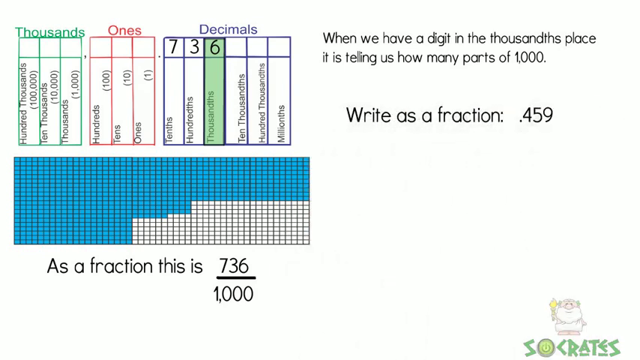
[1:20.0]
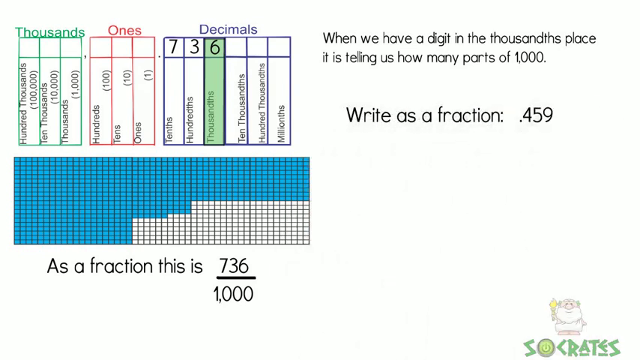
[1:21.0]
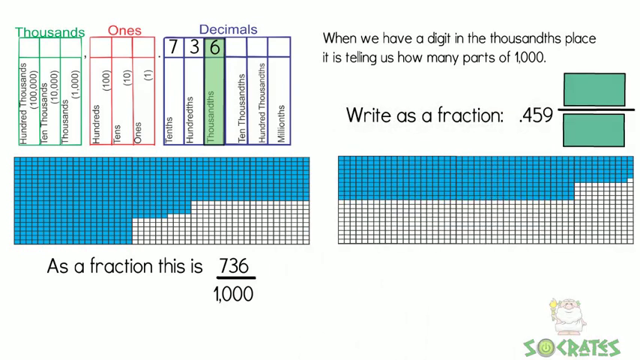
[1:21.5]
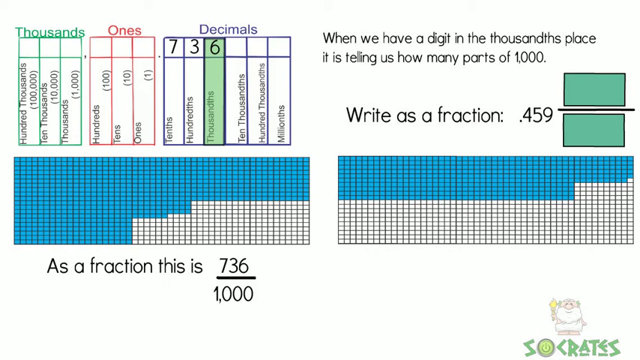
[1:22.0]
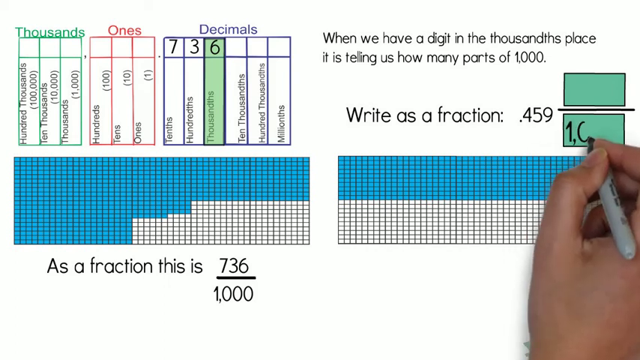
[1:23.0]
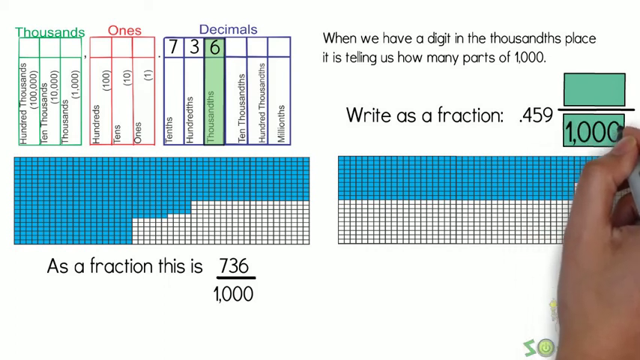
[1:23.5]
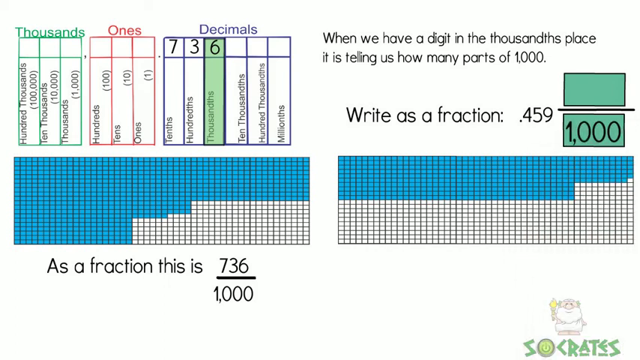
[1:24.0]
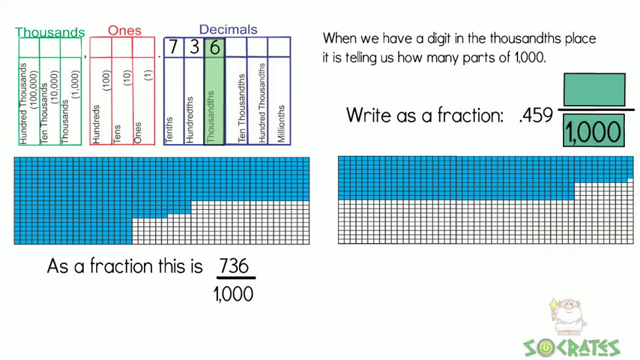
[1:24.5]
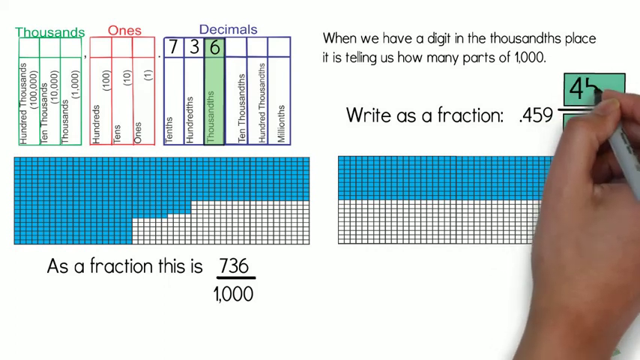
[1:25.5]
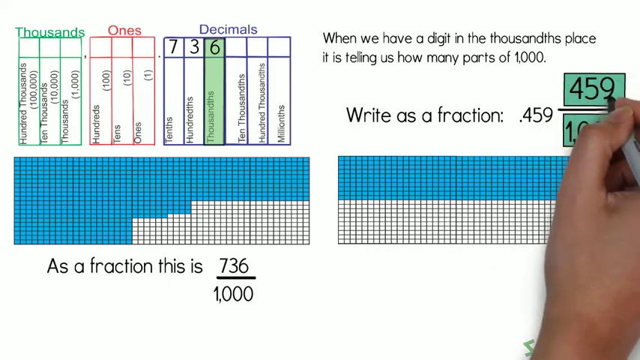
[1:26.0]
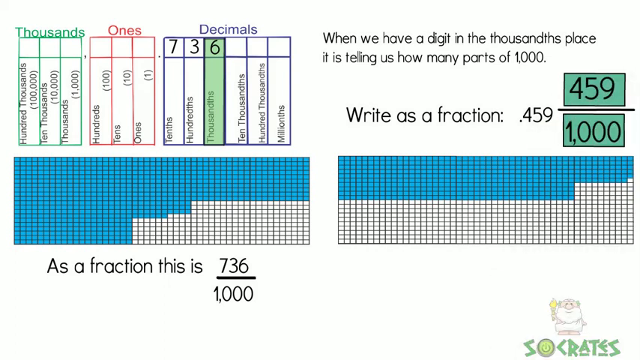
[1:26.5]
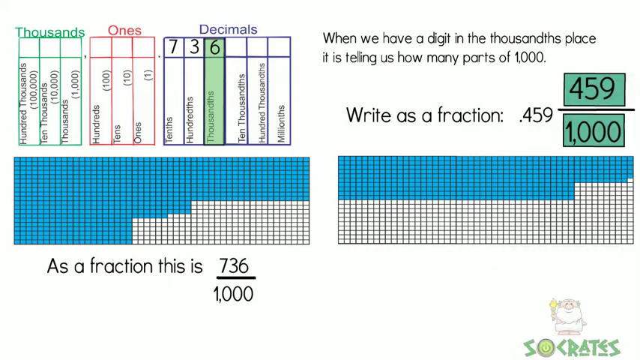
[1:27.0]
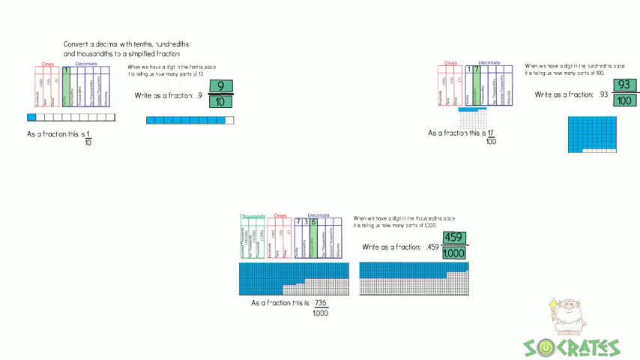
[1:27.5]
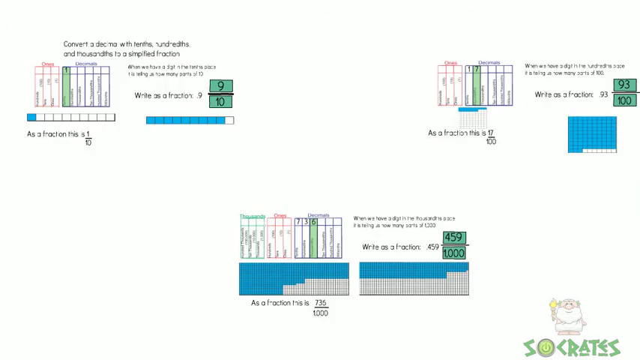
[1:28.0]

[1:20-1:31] On the left are blocks for thousands, ones and decimals. Under decimals there is a 7 under tenths, a 3 under hundredths and a 6 under thousandths, highlighted in green. Below are a thousand blocks, 736 of them highlighted in blue and the rest white, and underneath is written "as a fraction this is 736 divided by 100." On the right is written "when we have a digit in the thousands place it is telling us how many parts of 1000," followed by "write as a fraction .459". Then 459 divided by 1000 is shown, with 459 out of 1000 blocks highlighted in blue and the rest white. Finally the fractions are shown together: 9 divided by 10, 93 divided by 100, and 736 divided by 1000.